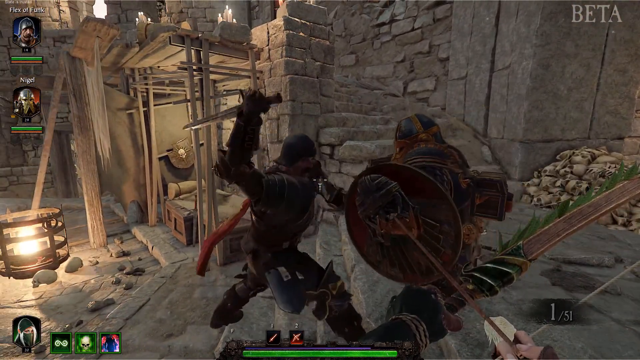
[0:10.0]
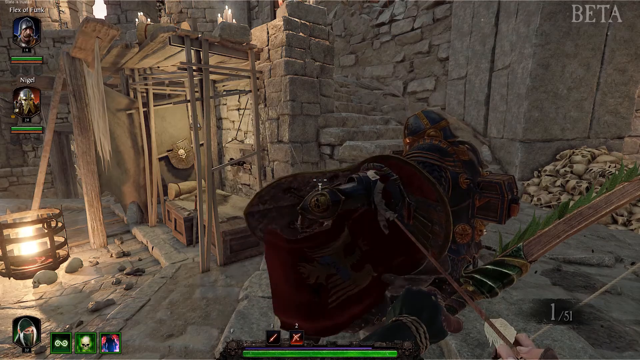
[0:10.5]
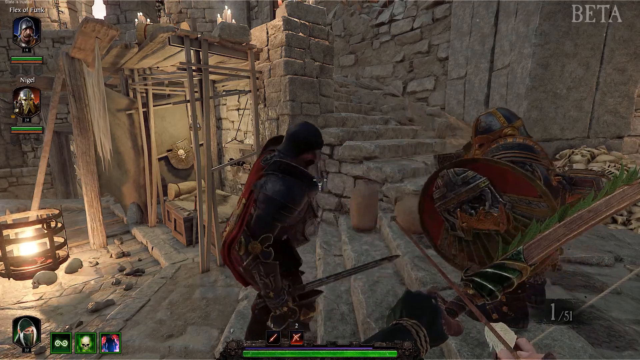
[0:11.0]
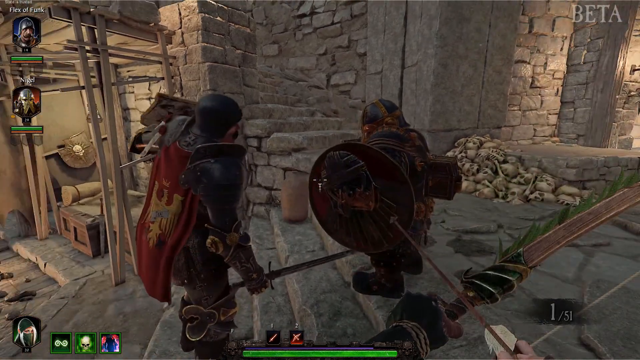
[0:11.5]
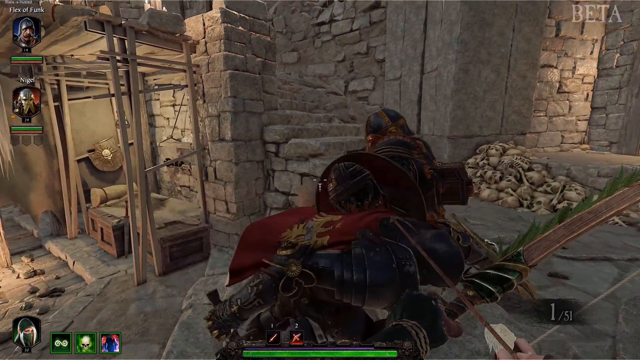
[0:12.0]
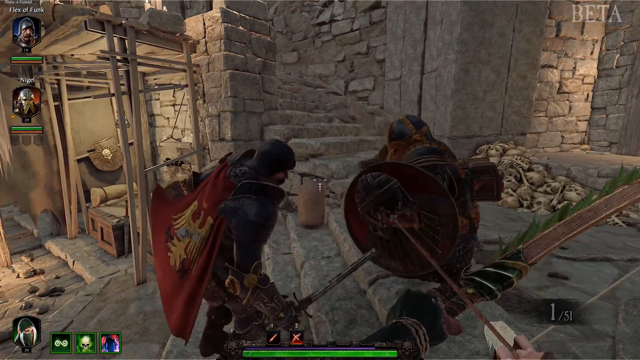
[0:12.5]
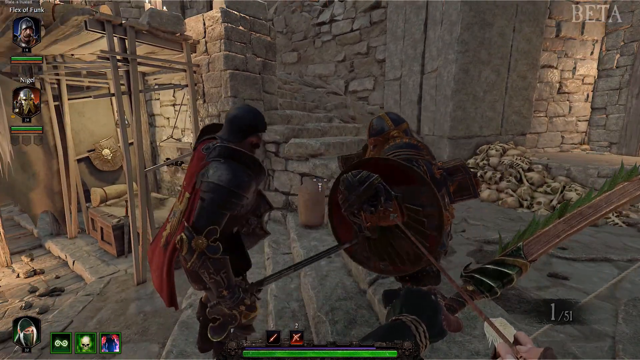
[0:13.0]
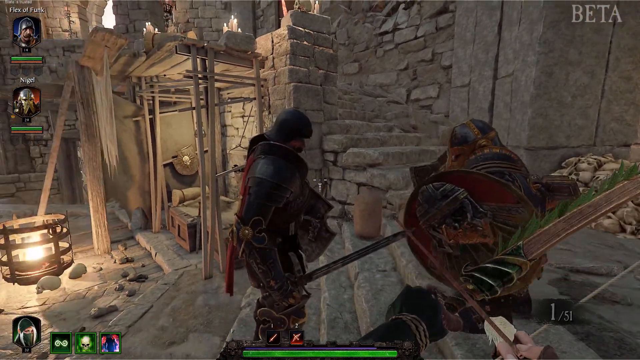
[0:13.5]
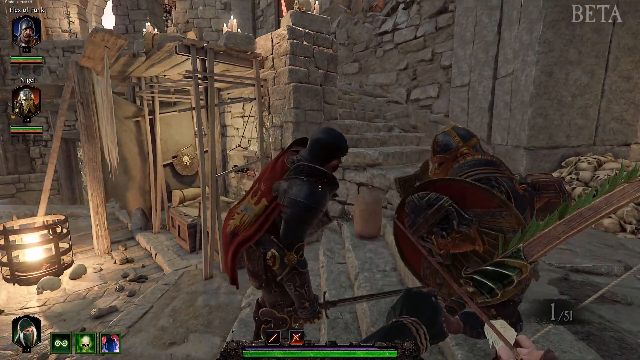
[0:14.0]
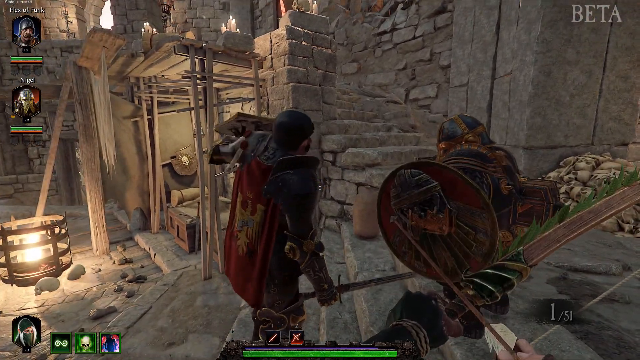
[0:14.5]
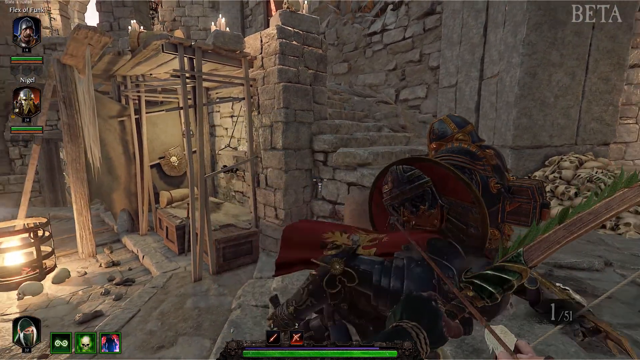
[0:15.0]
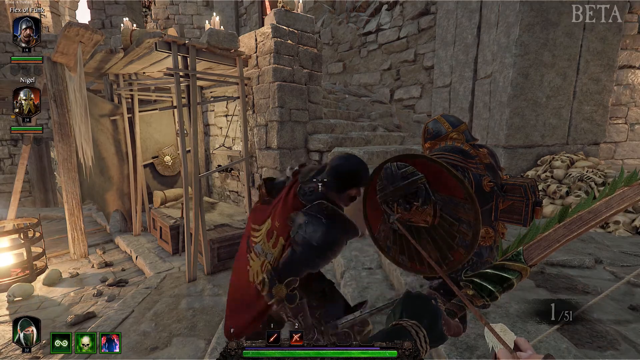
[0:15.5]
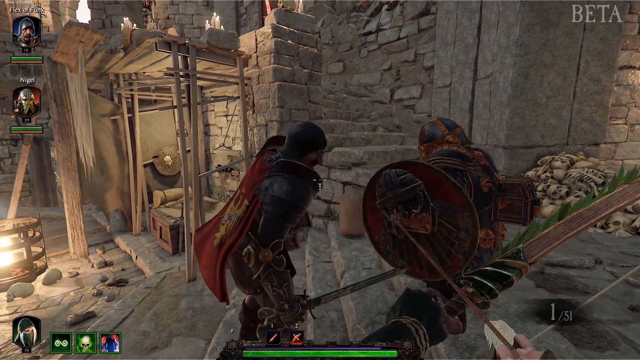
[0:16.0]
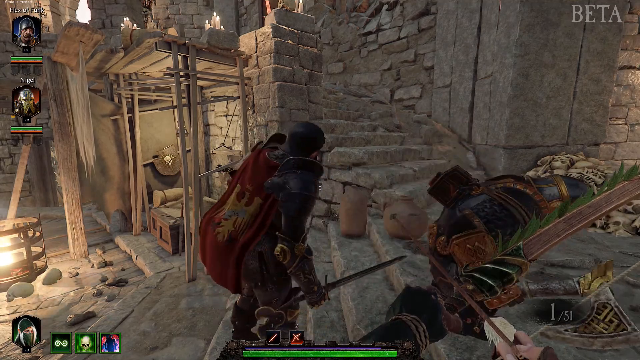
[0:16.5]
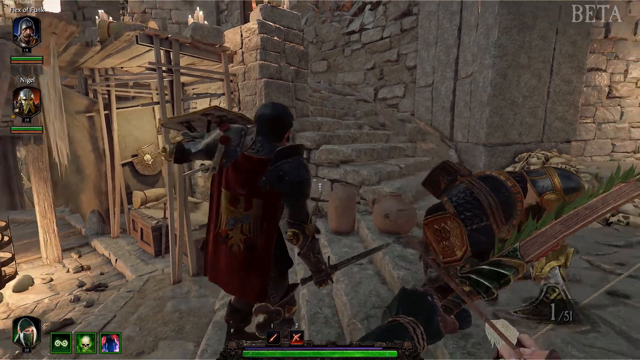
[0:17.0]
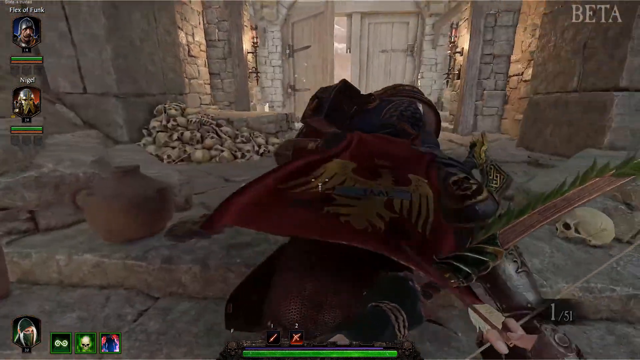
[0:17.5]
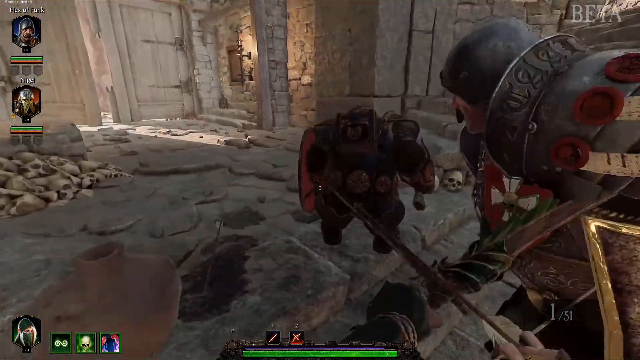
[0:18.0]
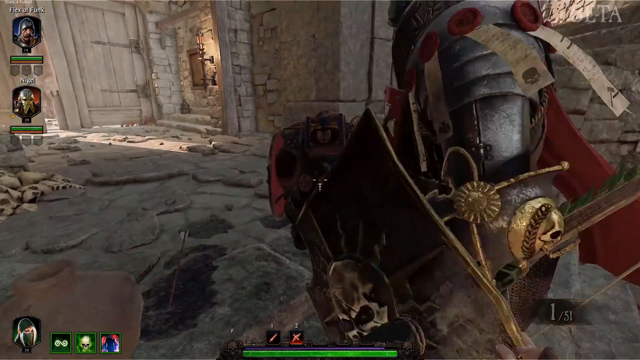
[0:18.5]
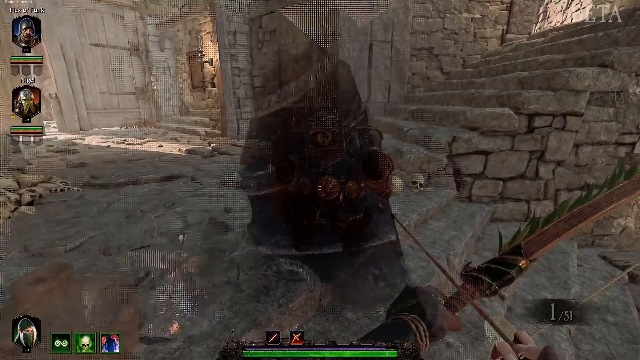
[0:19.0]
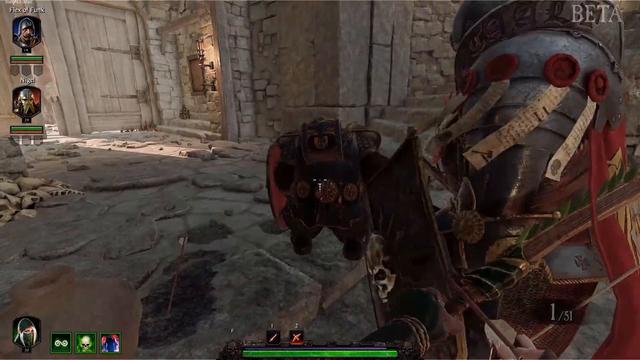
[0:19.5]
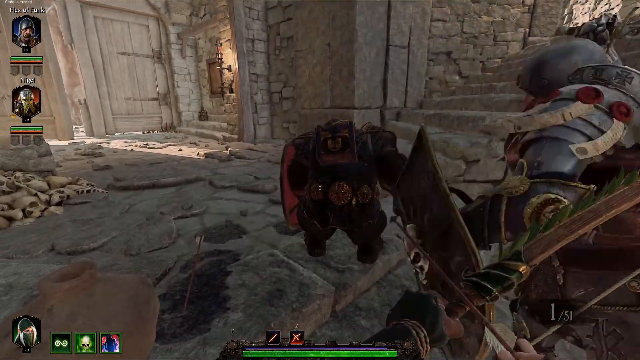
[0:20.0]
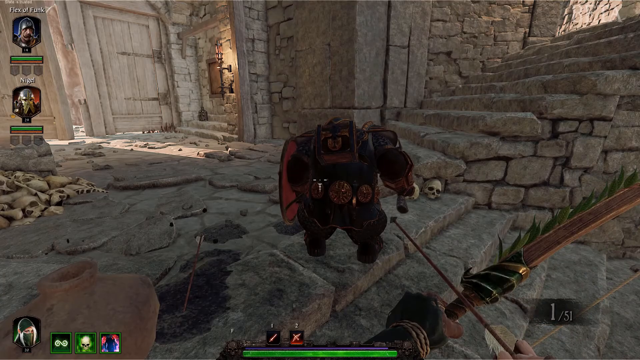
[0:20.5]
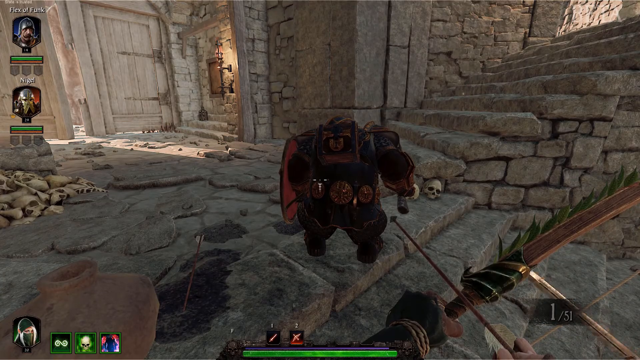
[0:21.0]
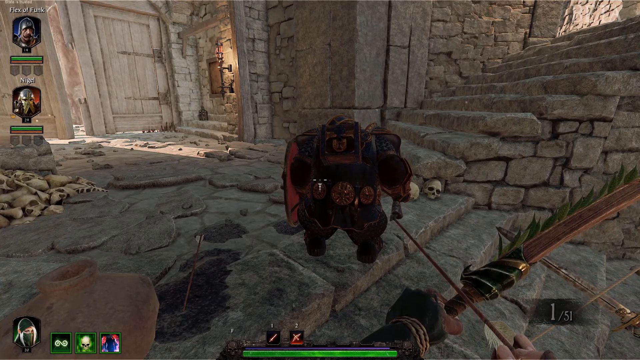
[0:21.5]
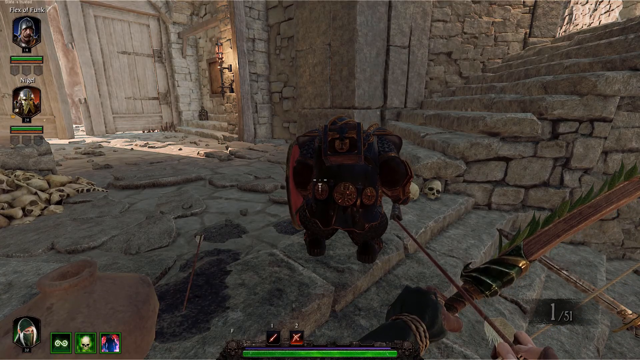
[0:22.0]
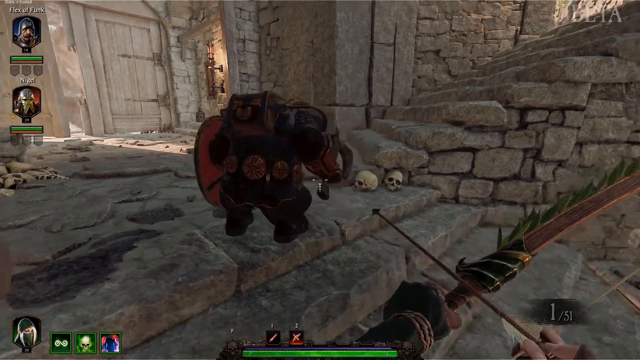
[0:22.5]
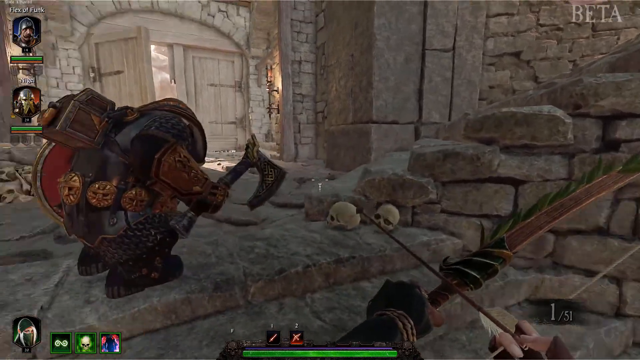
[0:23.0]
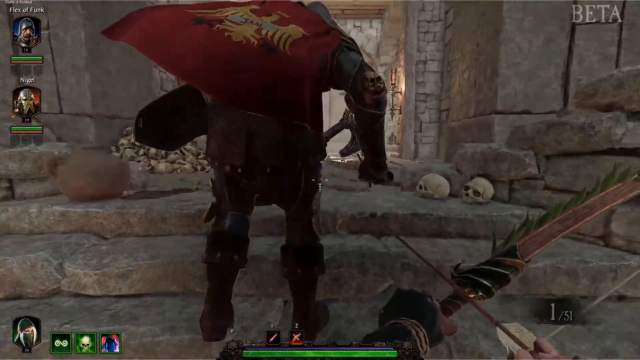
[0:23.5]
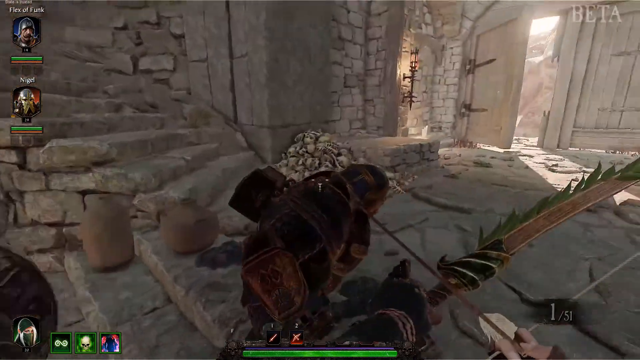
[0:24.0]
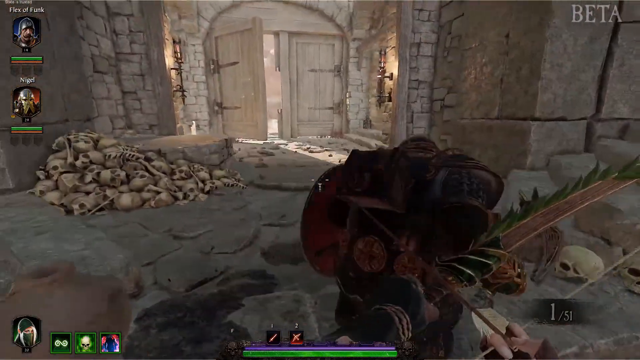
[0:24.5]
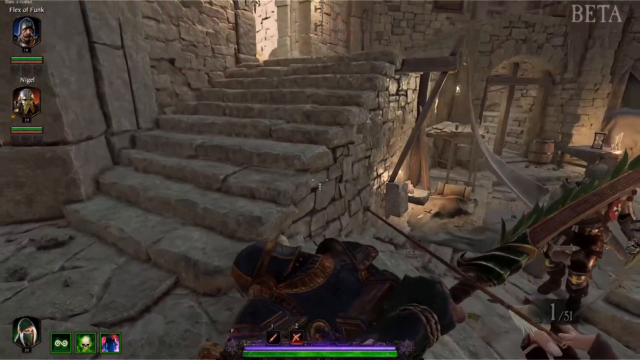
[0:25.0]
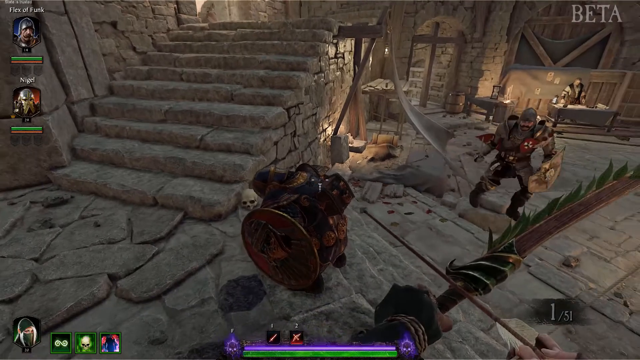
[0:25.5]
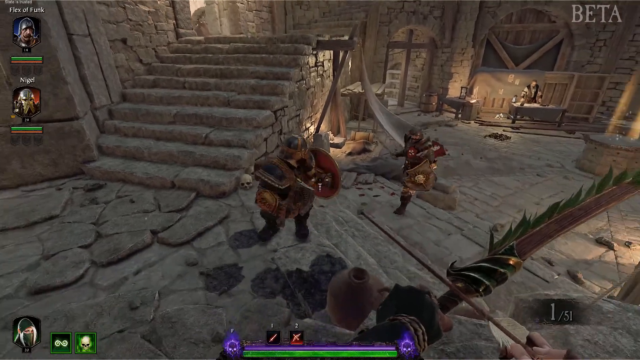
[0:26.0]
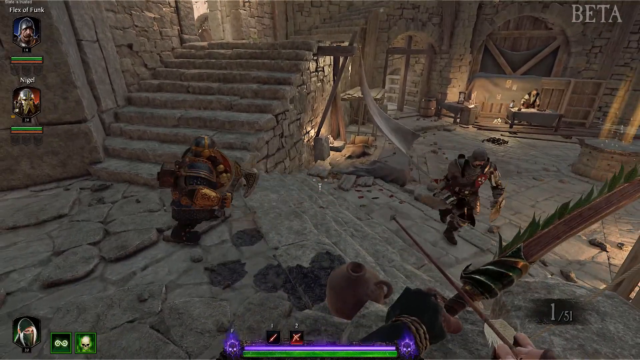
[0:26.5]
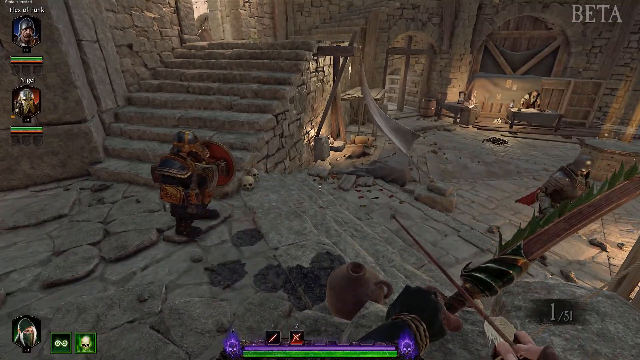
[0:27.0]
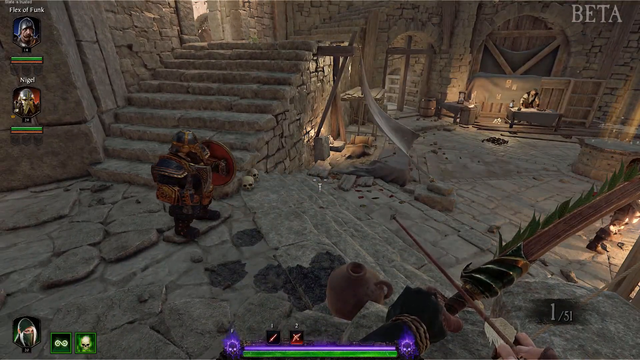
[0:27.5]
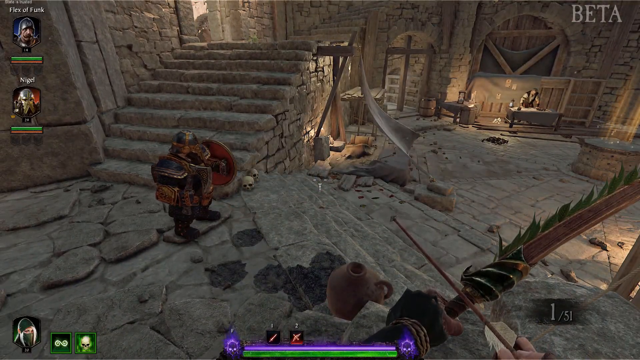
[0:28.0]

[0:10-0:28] The fighting becomes more intense, with more attacking motion. It looks like Flexaflunk is chopping off Nigel's head, but Nigel is good at protecting himself, so the view is mostly of them fighting. The movements are somewhat stagnant; a character other than Flexaflunk hits a rock with a sword. The animation probably looks a little older, though it still looks fairly new. The background is basic: brick, fire and wood, along with a pile of skull bones. The brightest colors are the characters' armor and what they are wearing.